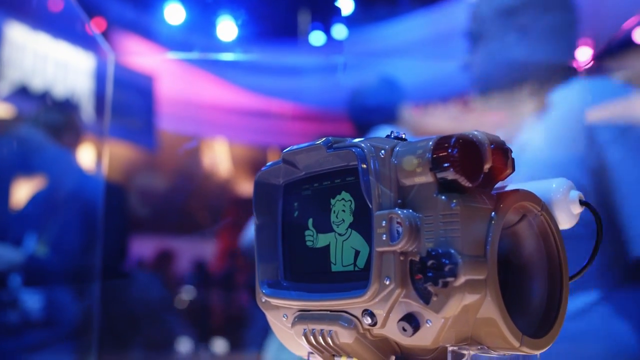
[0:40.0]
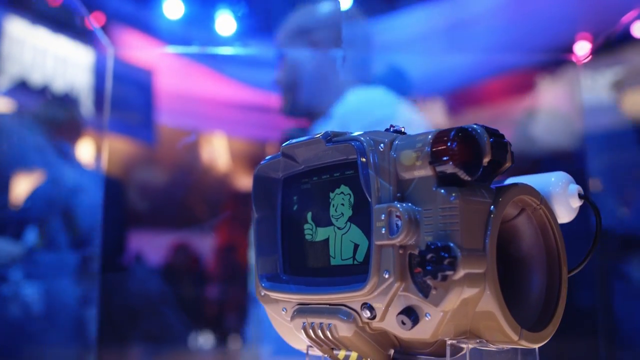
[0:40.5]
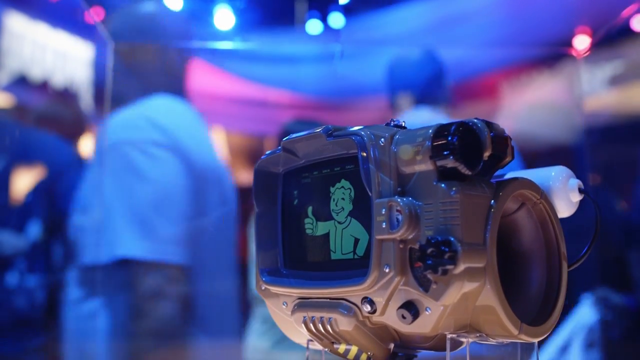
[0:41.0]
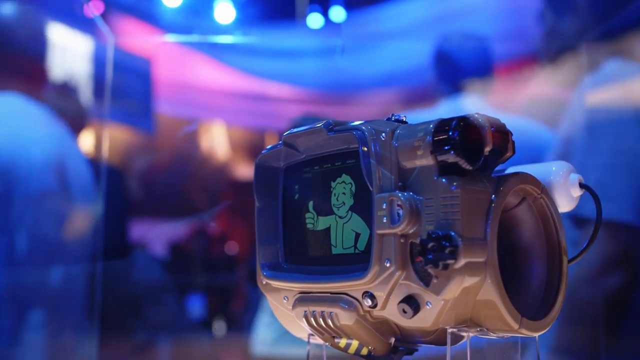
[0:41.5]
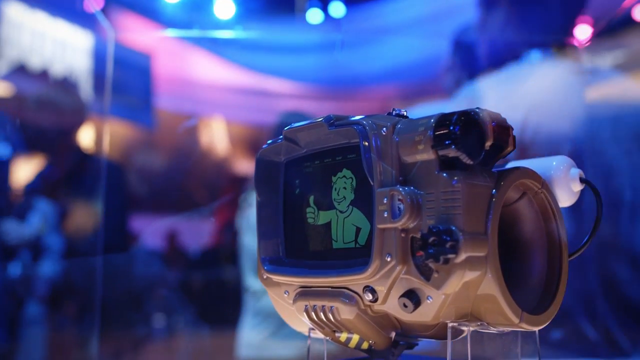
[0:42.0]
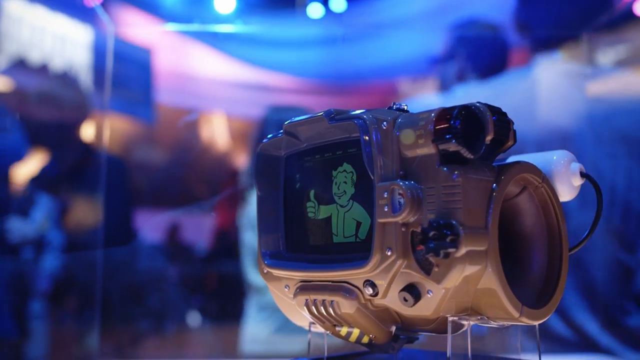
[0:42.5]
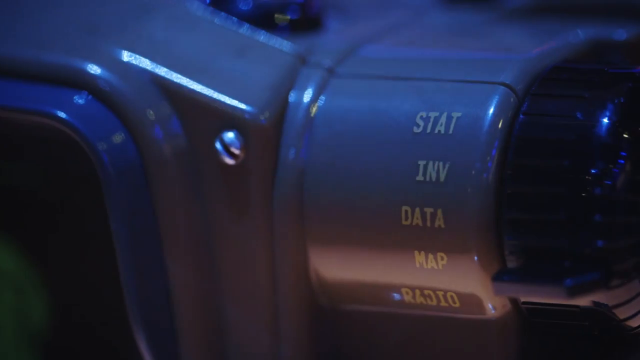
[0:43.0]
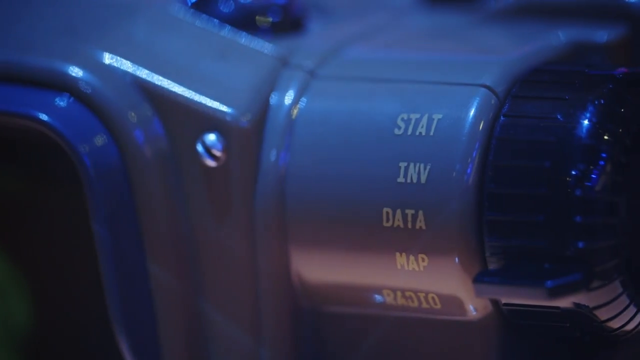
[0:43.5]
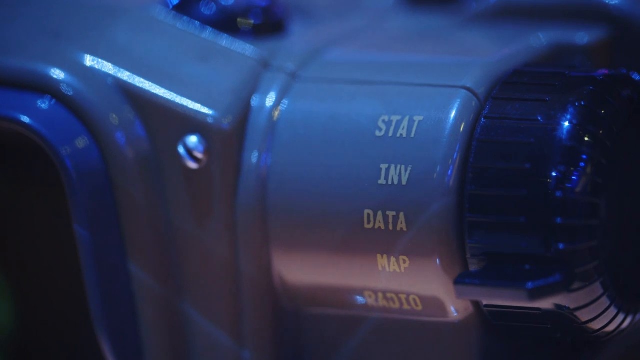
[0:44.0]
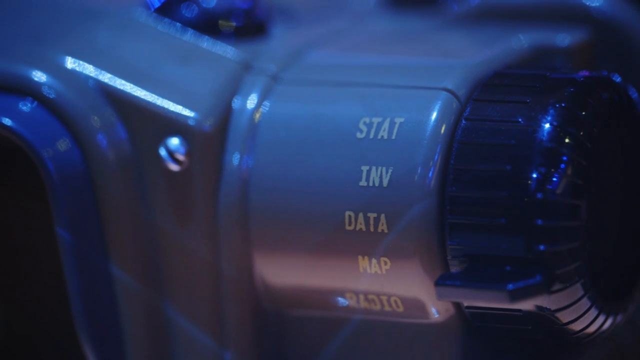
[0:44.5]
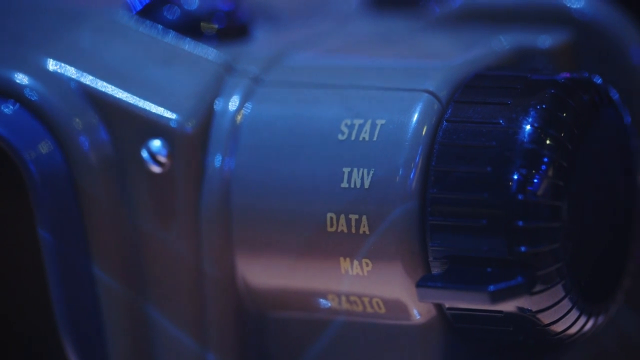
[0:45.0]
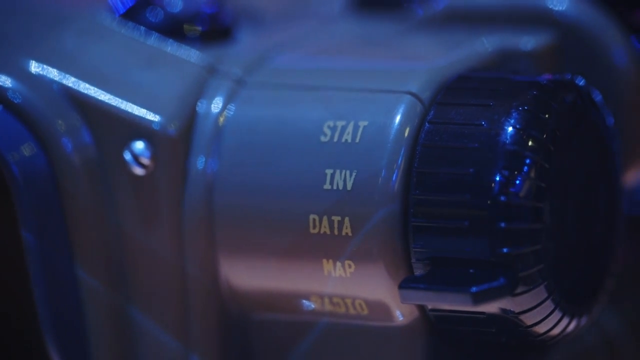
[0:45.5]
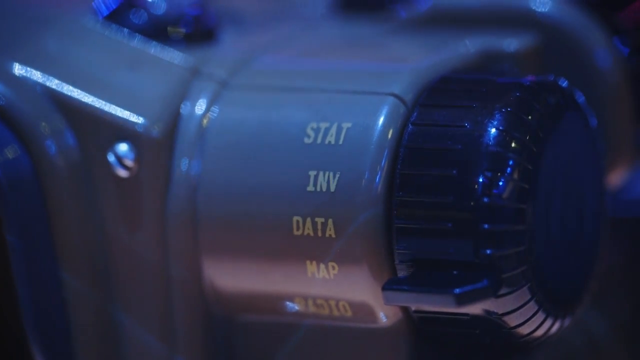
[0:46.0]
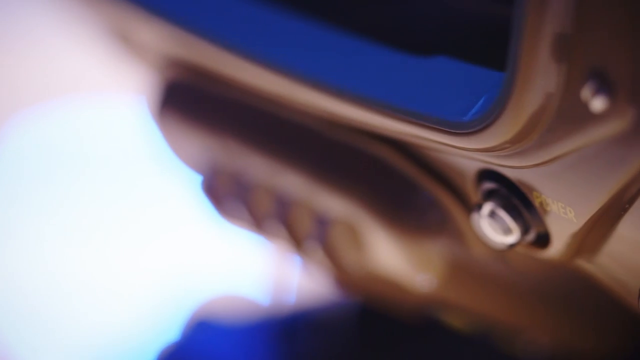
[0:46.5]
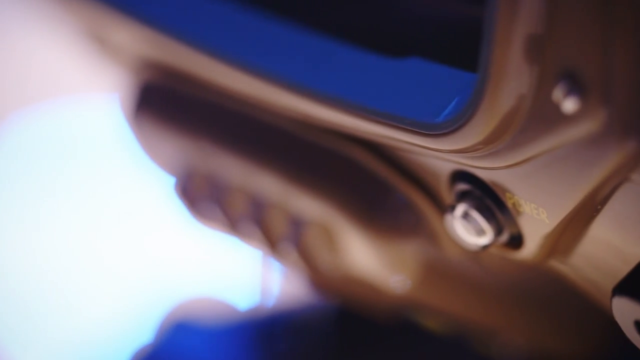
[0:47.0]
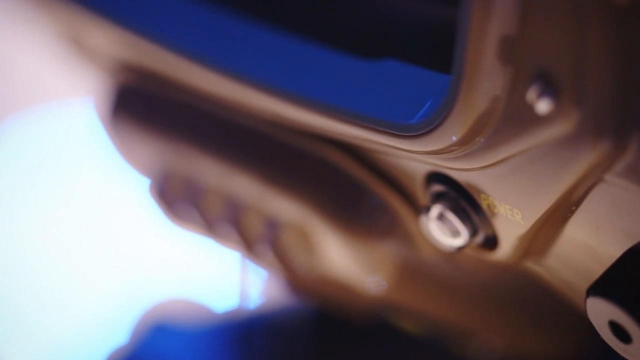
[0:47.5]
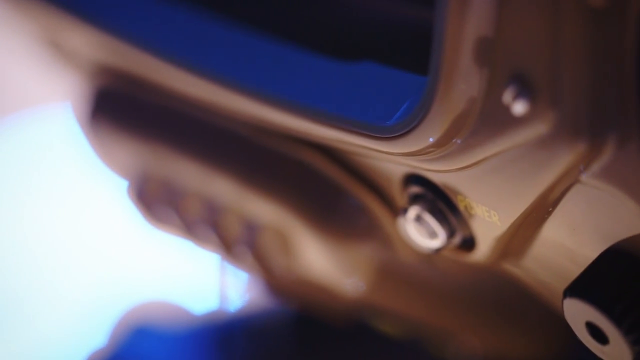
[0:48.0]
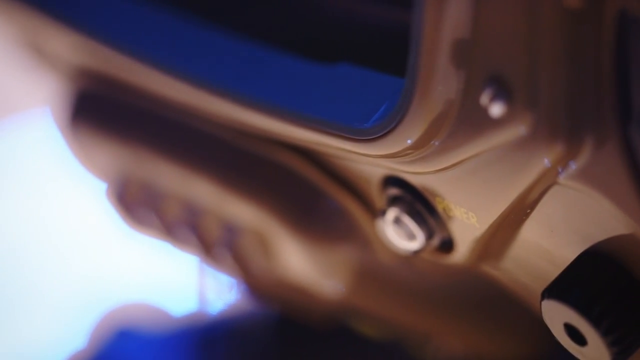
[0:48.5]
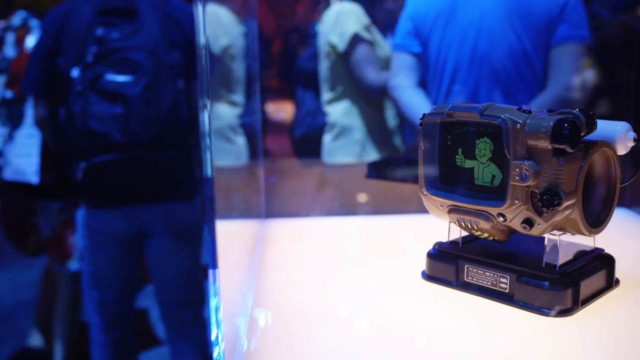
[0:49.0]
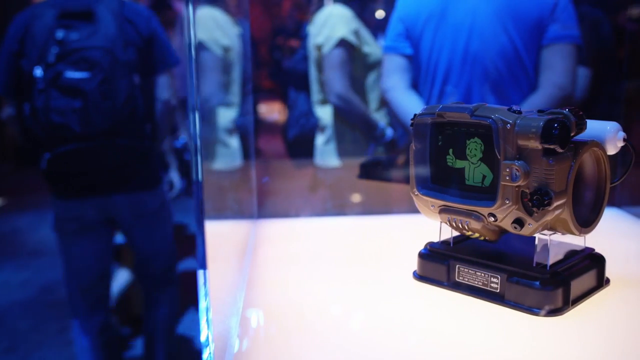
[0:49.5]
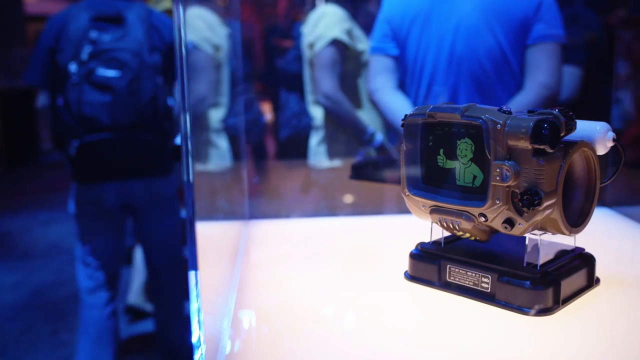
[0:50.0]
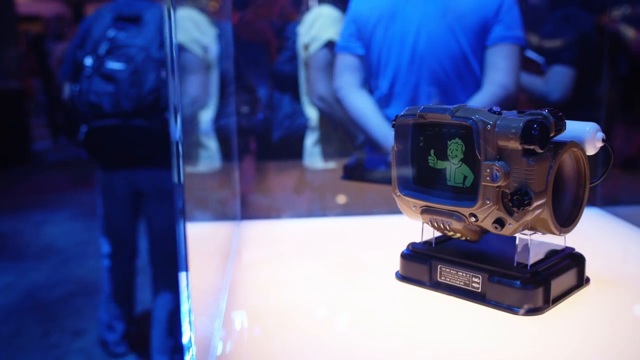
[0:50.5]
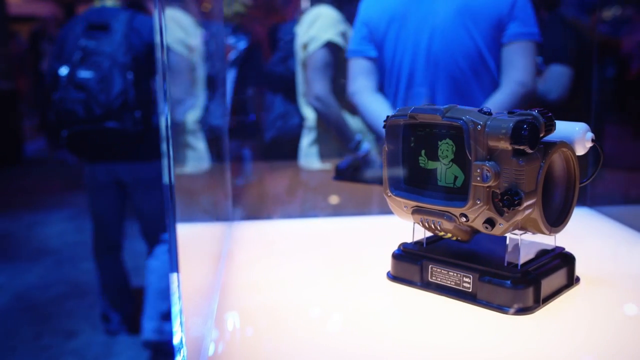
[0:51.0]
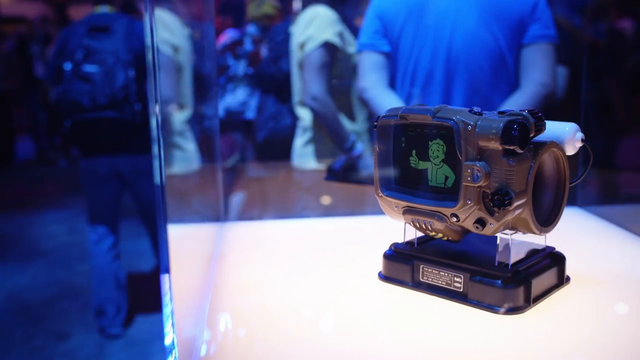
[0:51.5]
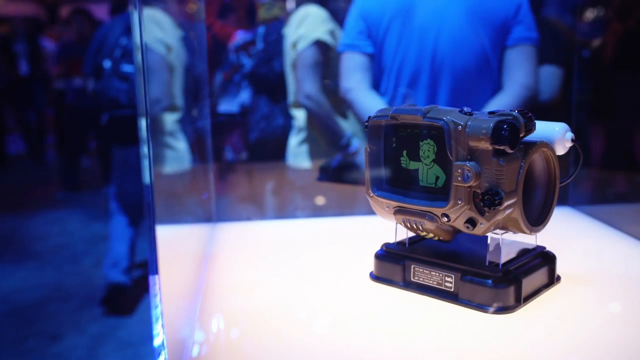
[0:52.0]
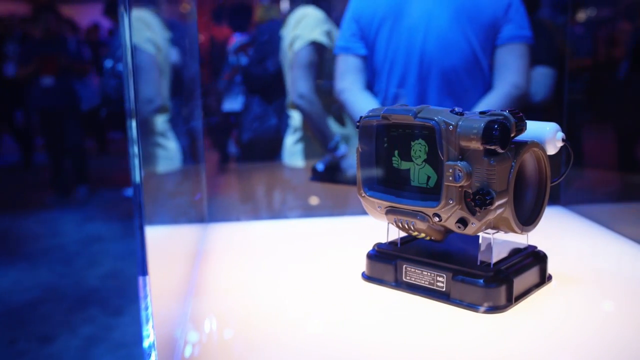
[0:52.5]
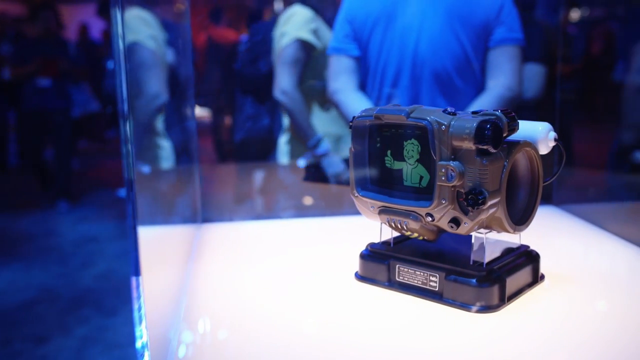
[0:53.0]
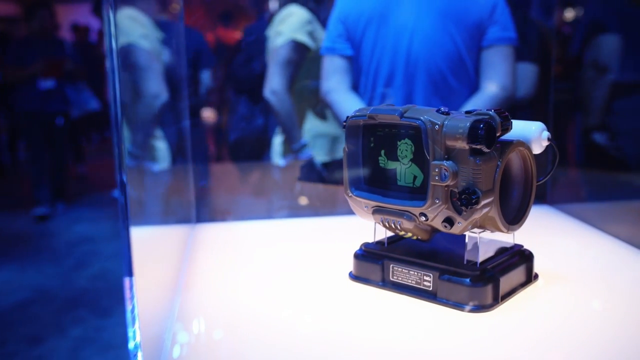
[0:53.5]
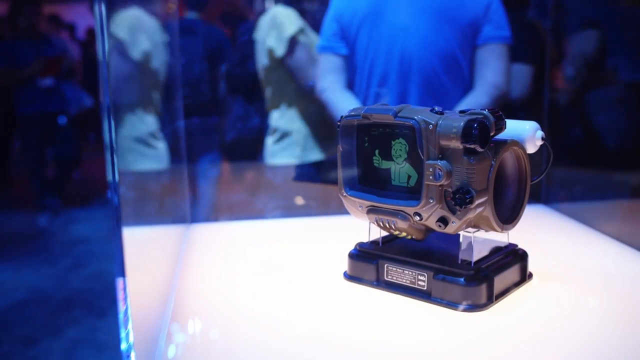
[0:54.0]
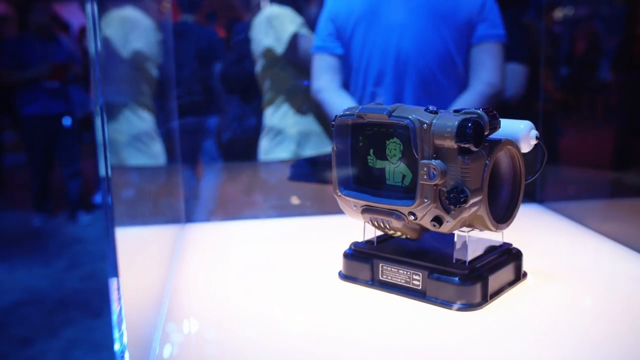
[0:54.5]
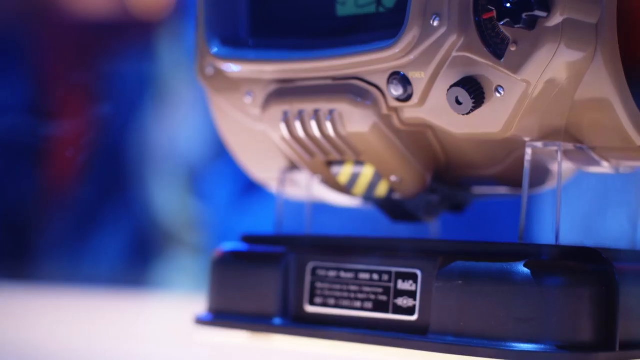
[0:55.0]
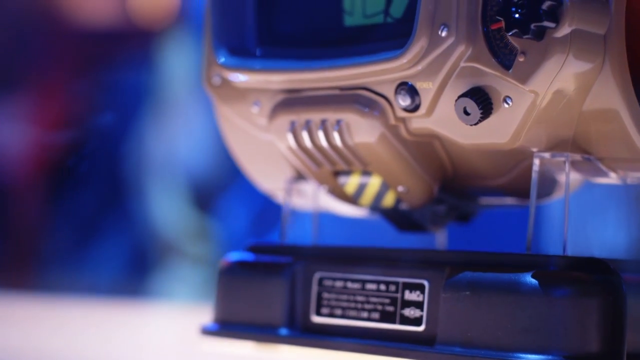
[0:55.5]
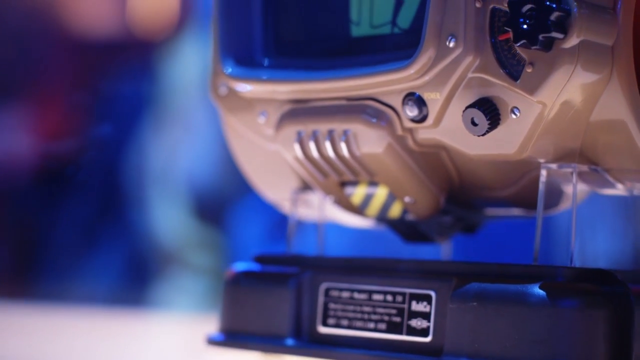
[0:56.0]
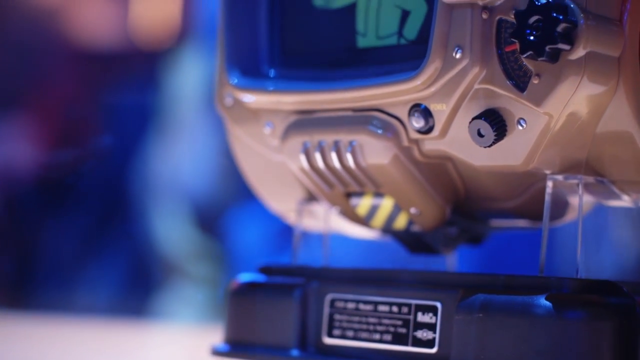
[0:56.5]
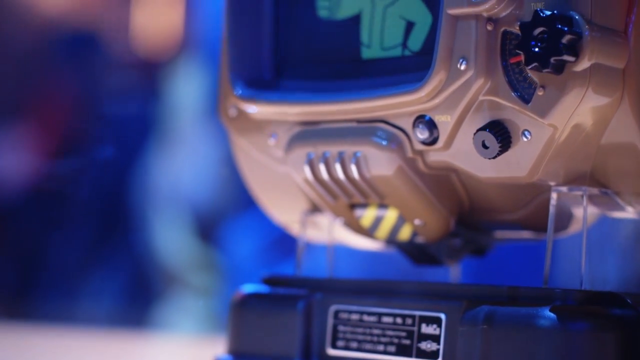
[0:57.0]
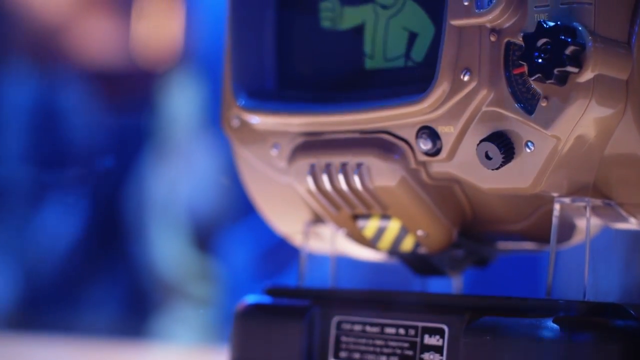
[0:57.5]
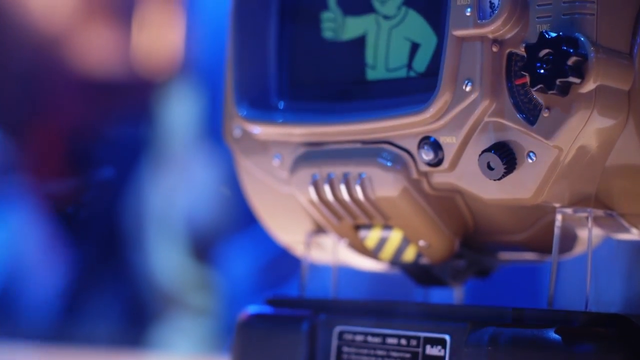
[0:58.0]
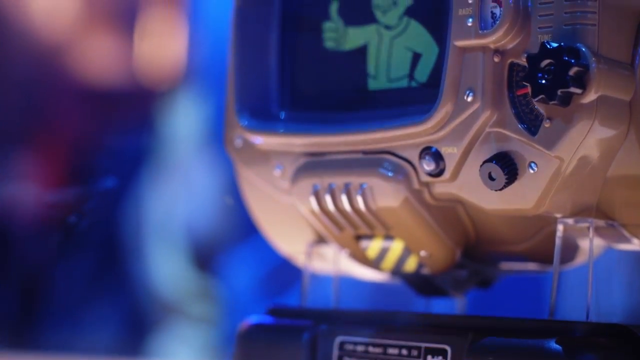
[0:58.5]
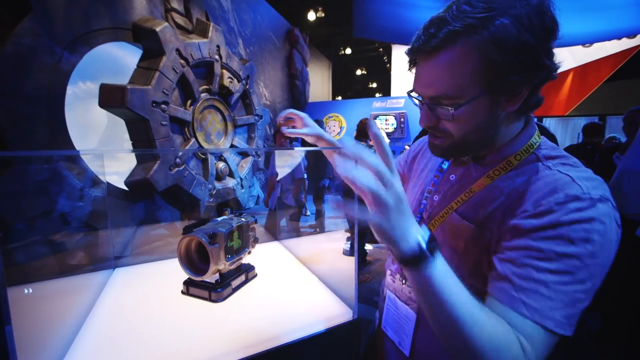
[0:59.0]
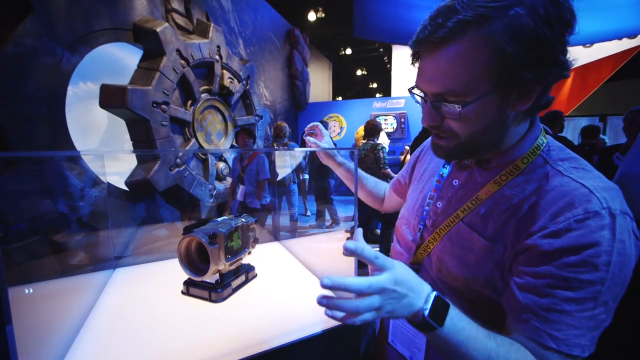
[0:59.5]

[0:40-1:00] The words "stat", "data" and "map" appear on the gold device, which has a black screen with a green character giving a thumbs up. A person stands at the side of the device with their hands behind their back. There is a blue dial. A man talks about the case while motioning to it. The screen shows "stat, INV, data, map, A310". A man with a backpack, a black shirt and blue jeans walks by, and a woman in a yellow short-sleeve shirt is there. There is a big picture of a wall. The gold device also has a black dial. A man walks past with a red lanyard, and there is a man in a white shirt with a bald head. A man with his hands behind his back talks to a woman with her hands at her side, and she puts her hands up. People walk by, and a man wearing a lanyard looks at the case, speaking about the device.